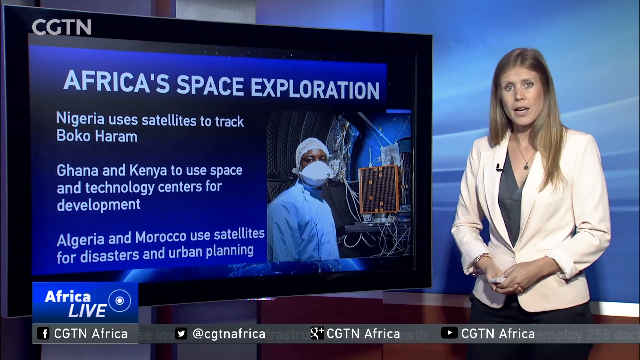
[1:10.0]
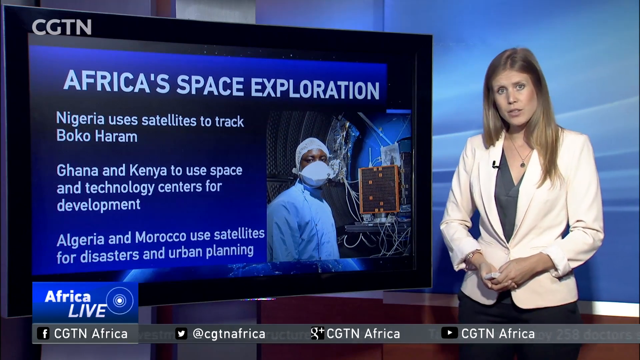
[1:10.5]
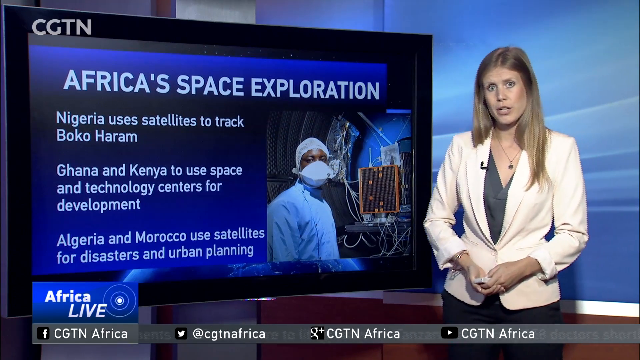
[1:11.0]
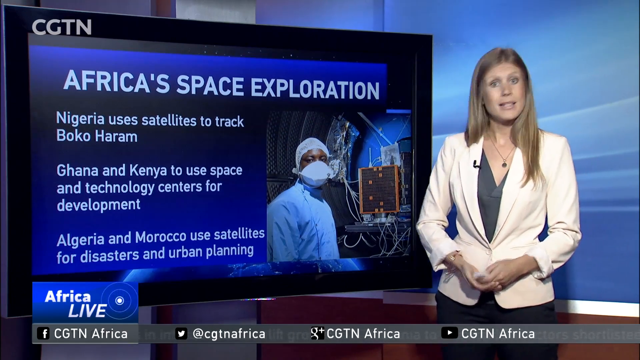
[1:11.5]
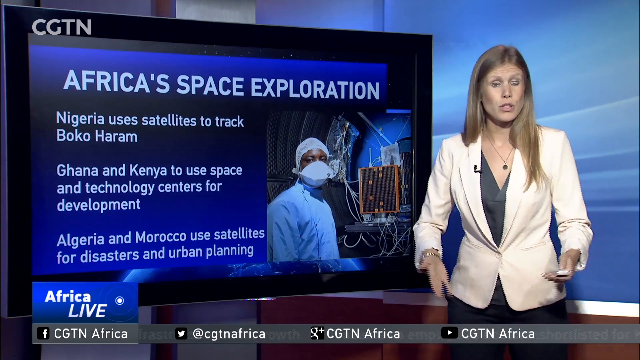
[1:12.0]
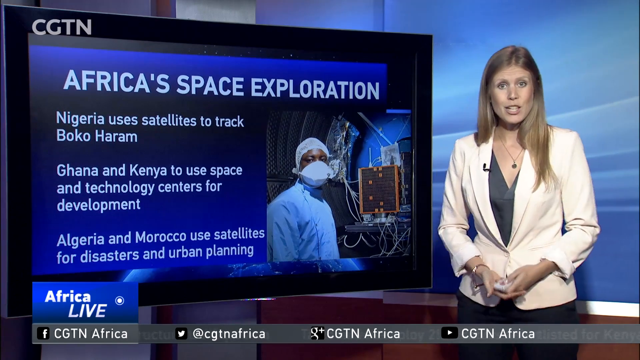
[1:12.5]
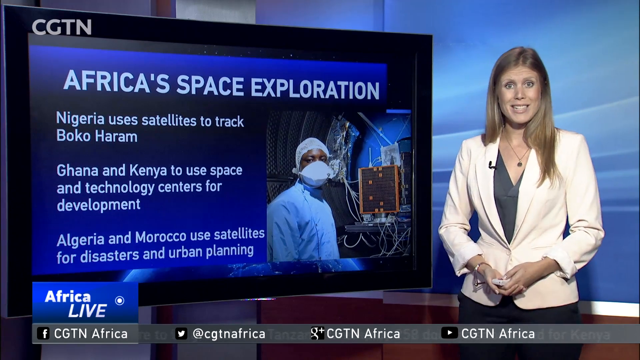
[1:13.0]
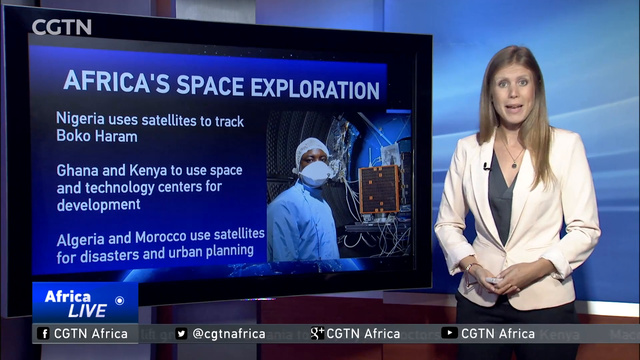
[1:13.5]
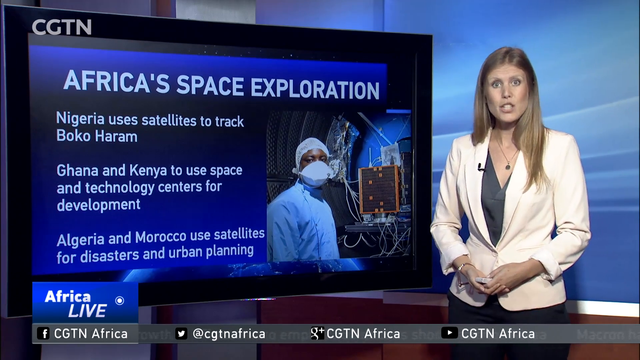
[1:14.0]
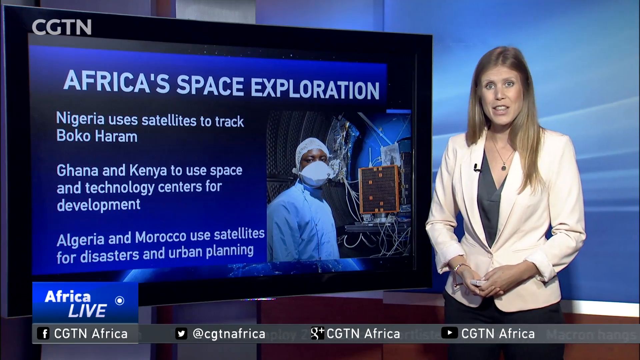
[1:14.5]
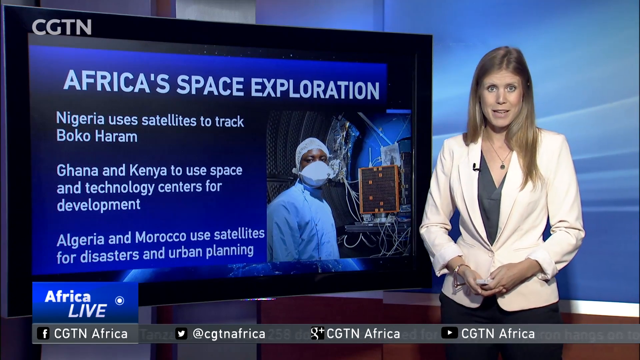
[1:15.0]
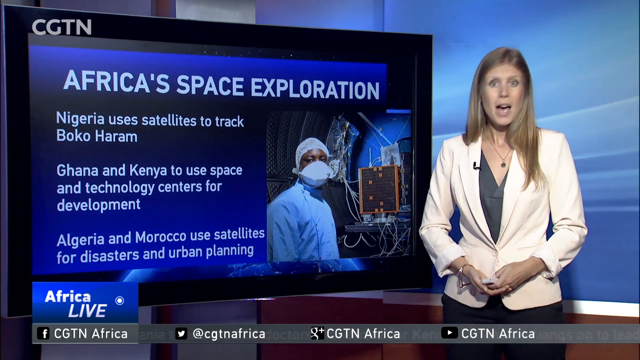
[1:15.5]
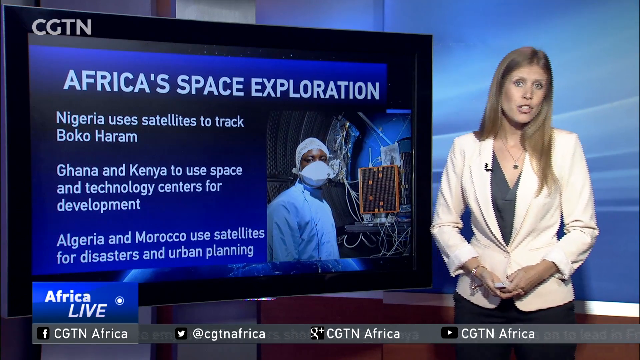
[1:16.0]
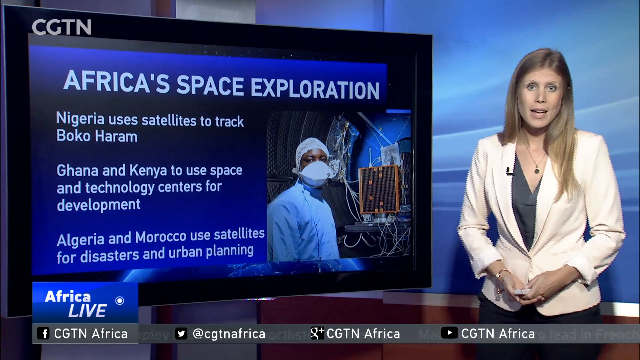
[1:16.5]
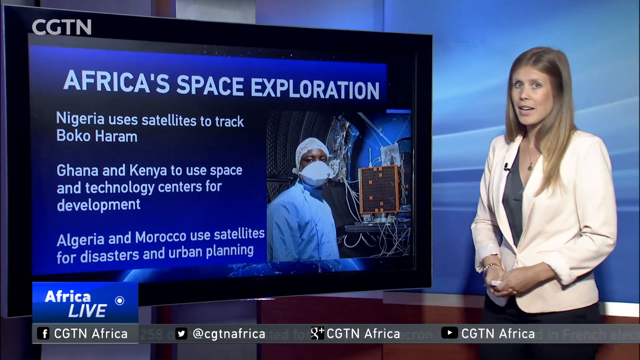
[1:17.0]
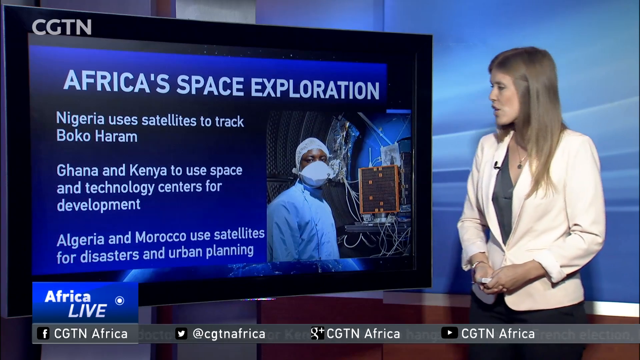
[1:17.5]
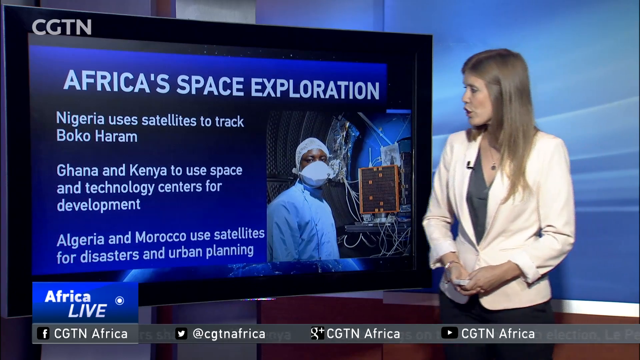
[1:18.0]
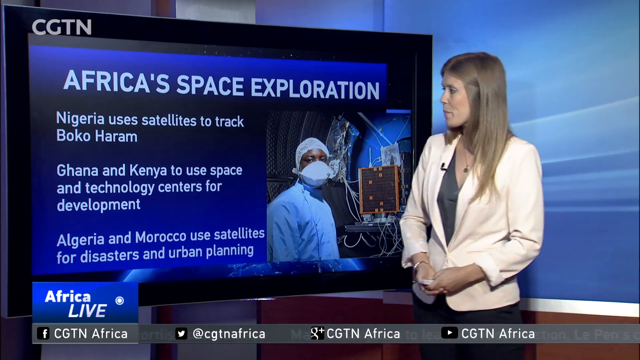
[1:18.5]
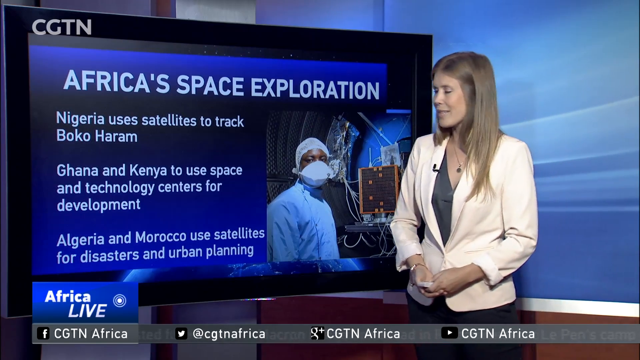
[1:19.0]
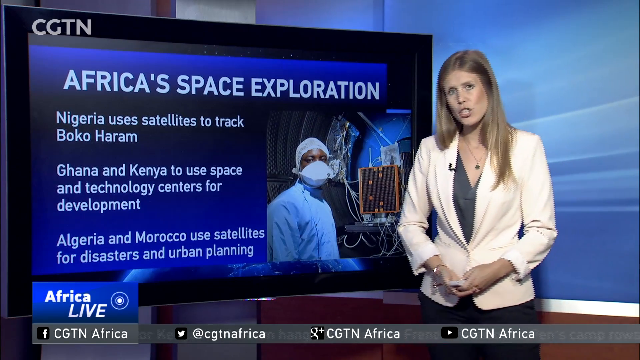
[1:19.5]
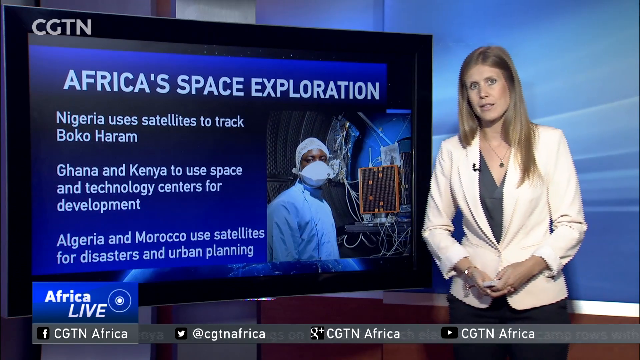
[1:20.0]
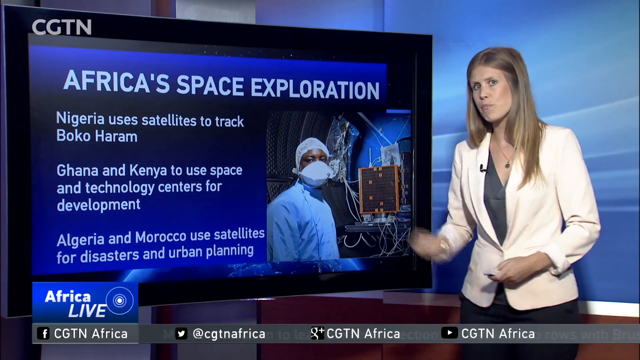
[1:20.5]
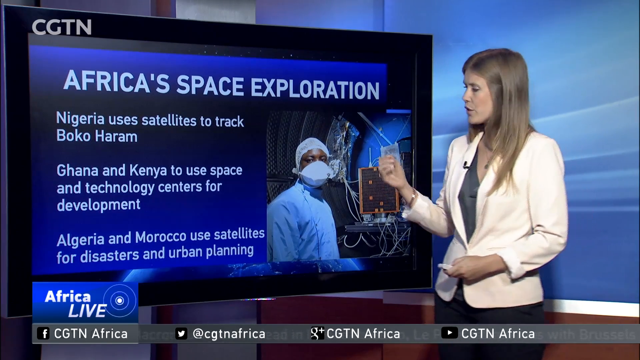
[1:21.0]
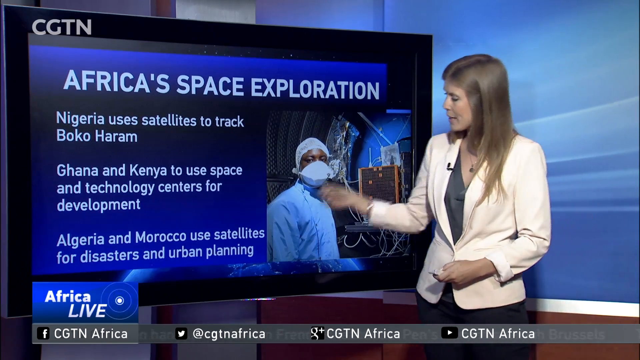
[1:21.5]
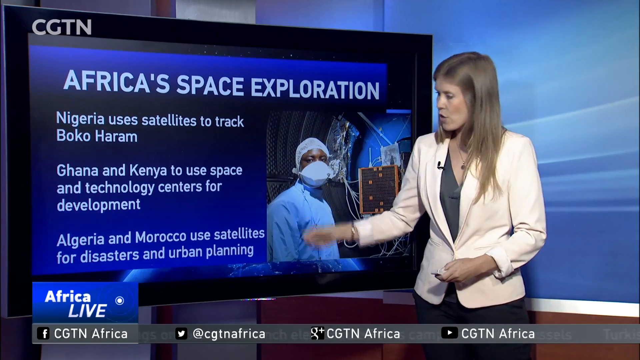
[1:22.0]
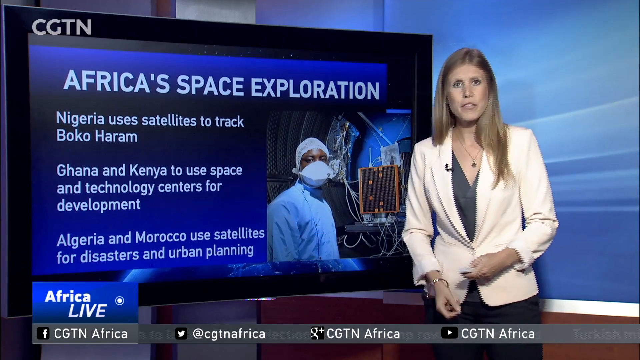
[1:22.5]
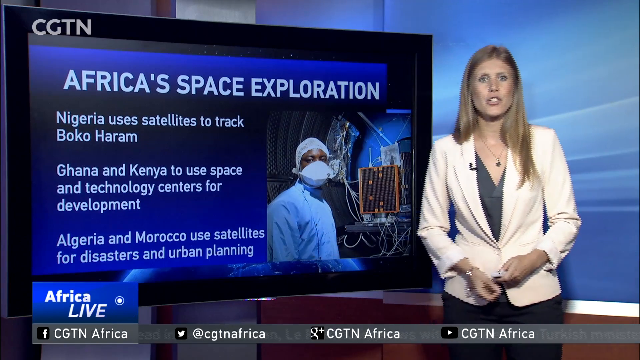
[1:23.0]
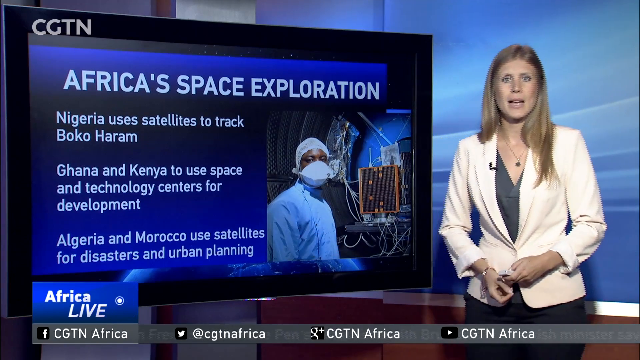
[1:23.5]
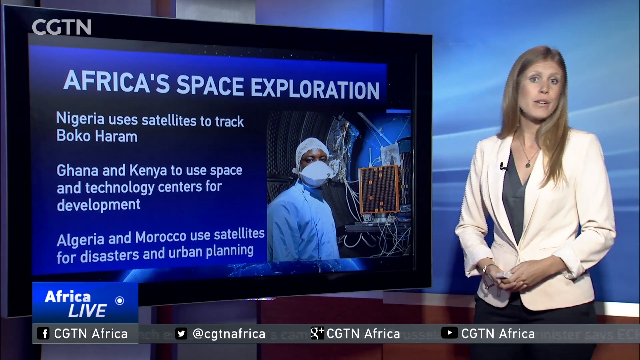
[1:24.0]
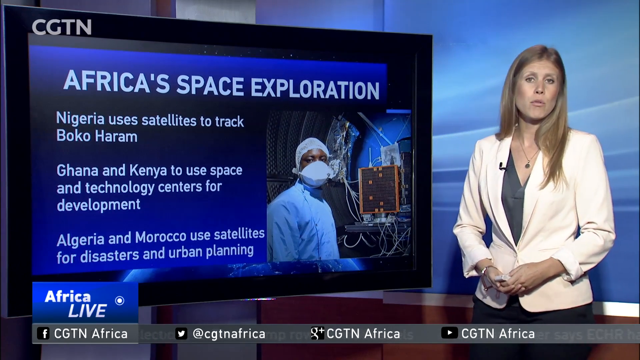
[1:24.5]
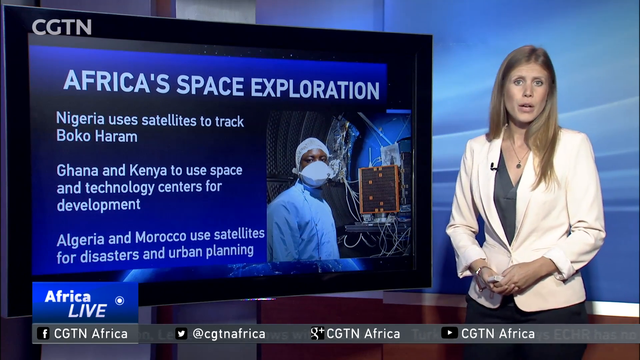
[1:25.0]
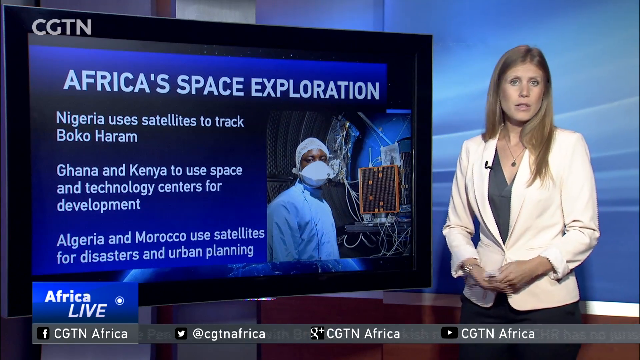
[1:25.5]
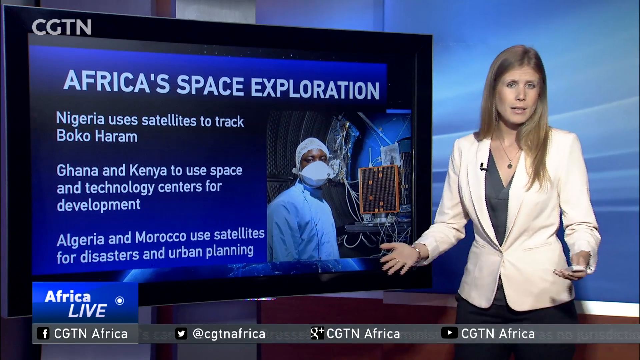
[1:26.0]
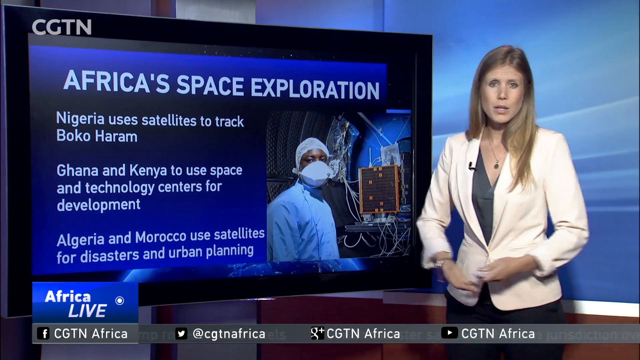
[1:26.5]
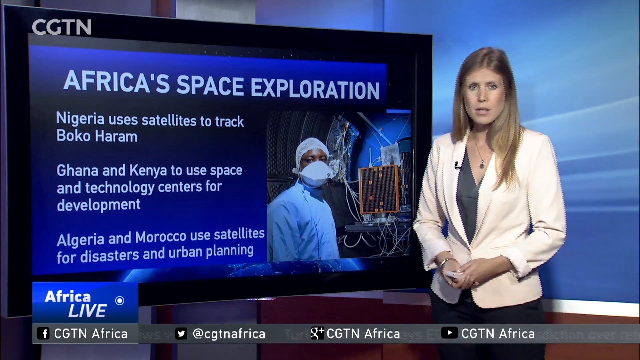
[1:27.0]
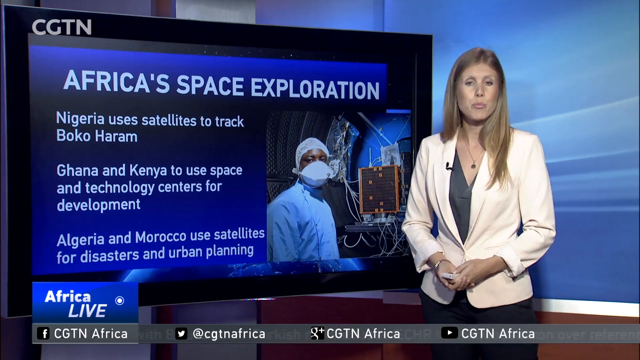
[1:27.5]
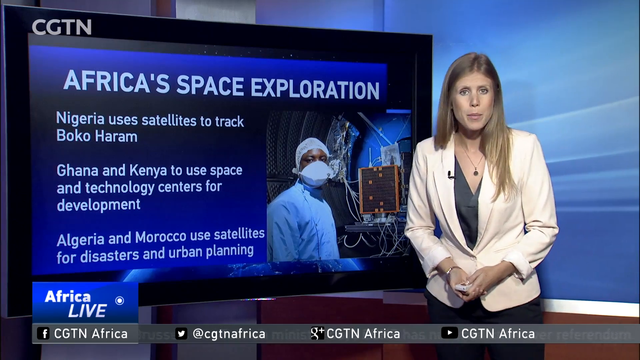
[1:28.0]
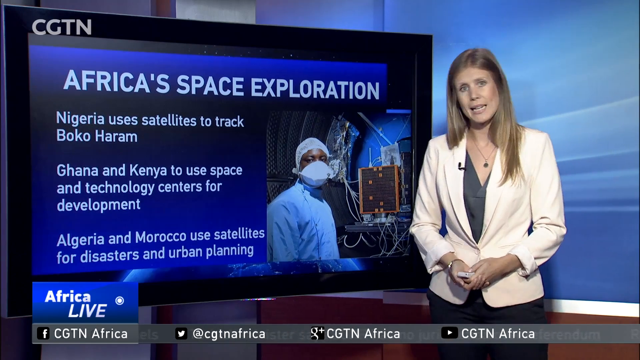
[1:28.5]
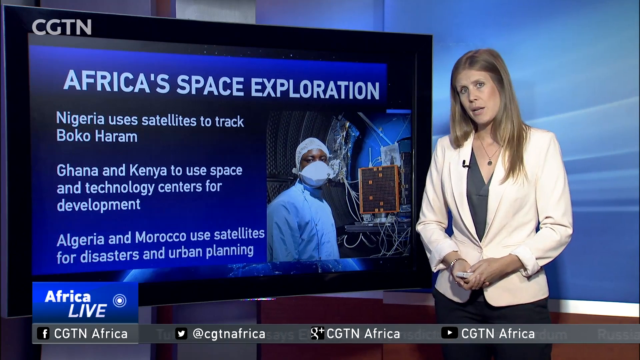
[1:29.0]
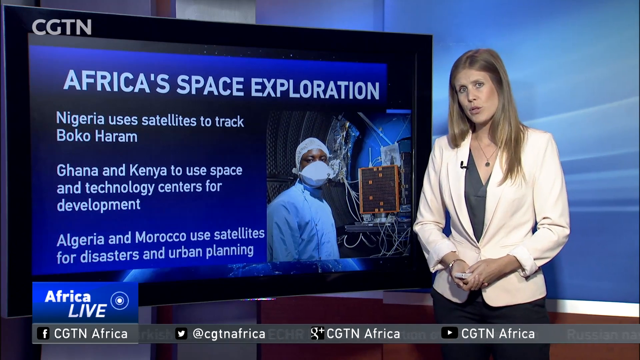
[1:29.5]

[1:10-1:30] The anchorwoman, with light hair, a light jacket, and a necklace, gives a presentation on a screen to her right about the space exploration of individual African nations, highlighting countries such as Egypt, which has partnered with Russia on satellites. More accomplishments are shown: Nigeria uses satellites to track Boko Haram, Ghana and Kenya use space and technology centers for development, and Algeria and Morocco use satellites for disasters and urban planning. A split screen shows a picture of a person wearing a surgical mask, with all kinds of equipment in the background in oranges, blues, and greens, along with multicolored cords and items.